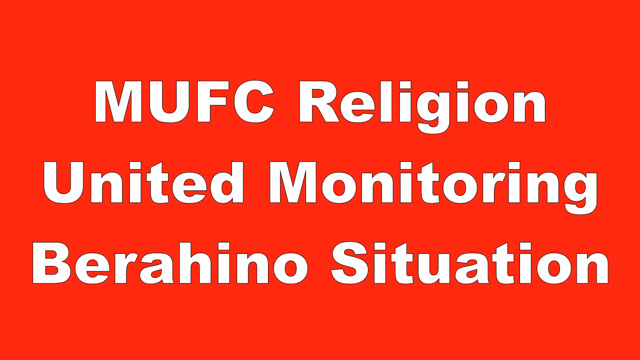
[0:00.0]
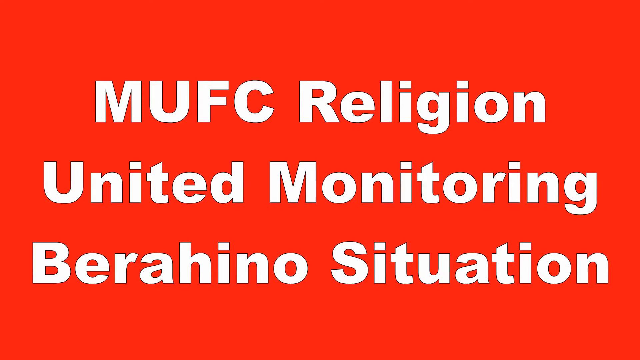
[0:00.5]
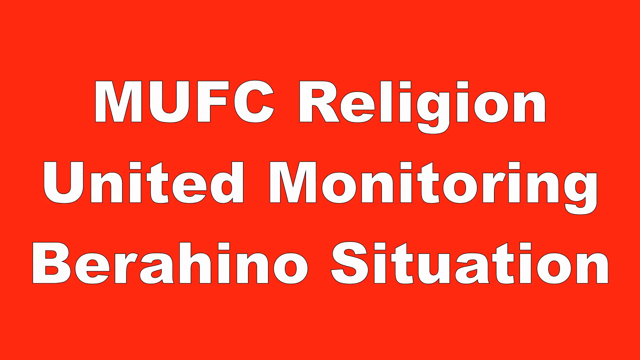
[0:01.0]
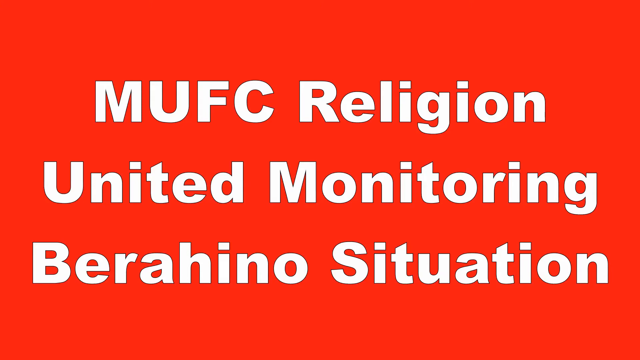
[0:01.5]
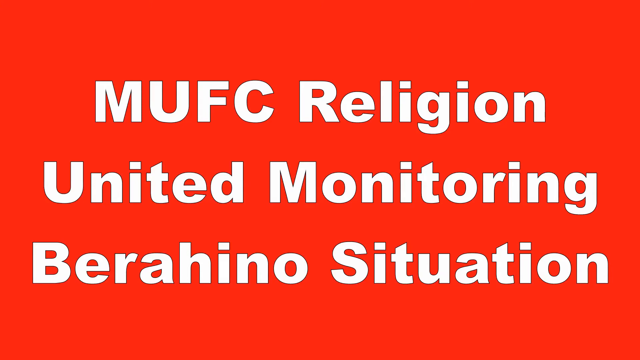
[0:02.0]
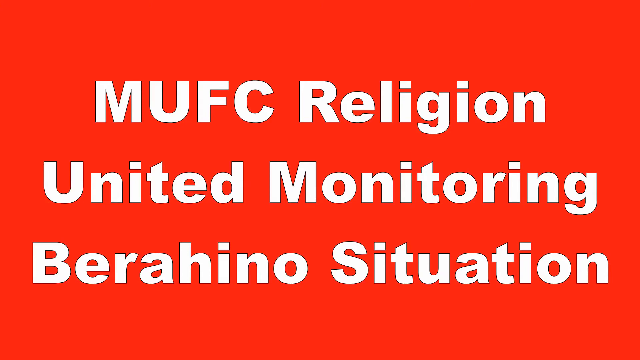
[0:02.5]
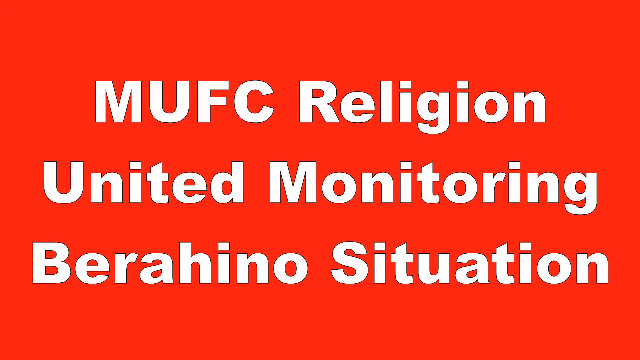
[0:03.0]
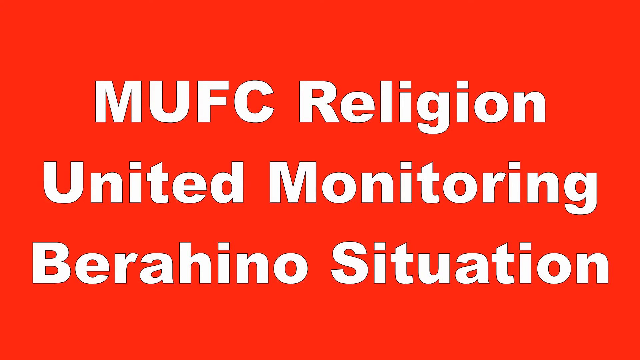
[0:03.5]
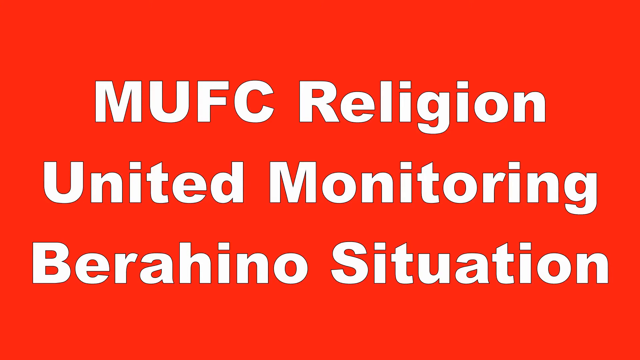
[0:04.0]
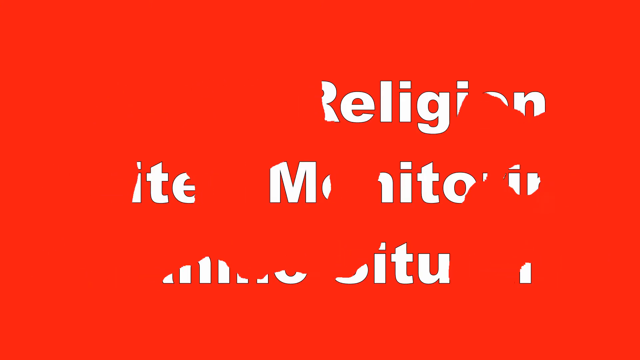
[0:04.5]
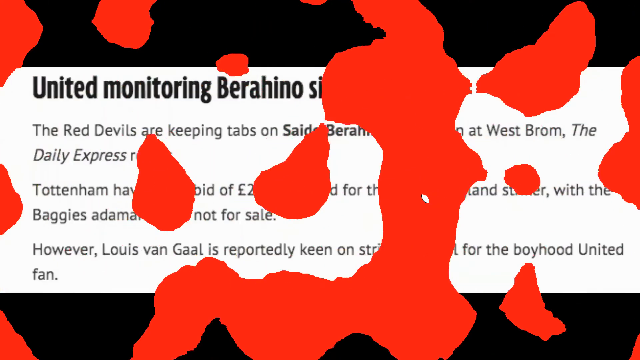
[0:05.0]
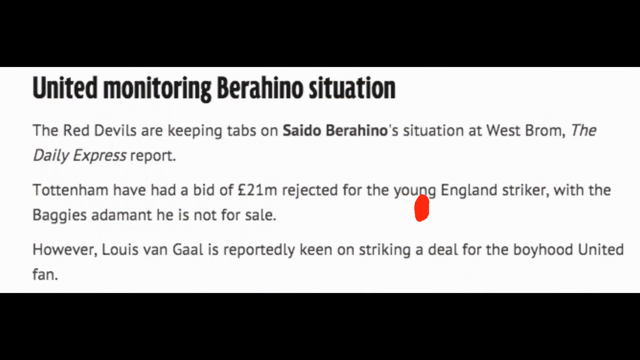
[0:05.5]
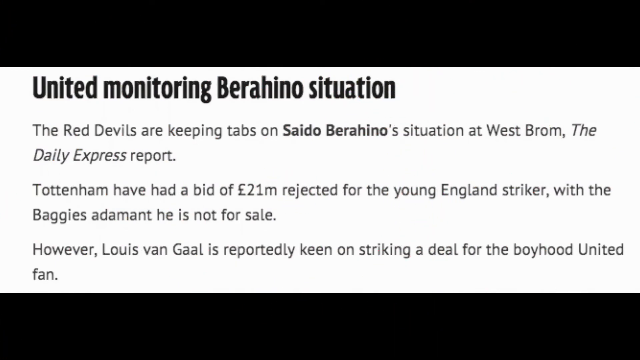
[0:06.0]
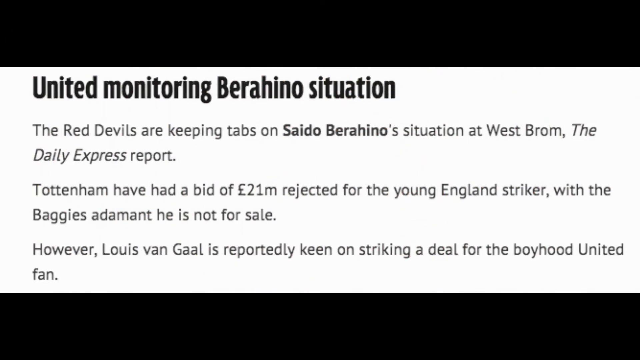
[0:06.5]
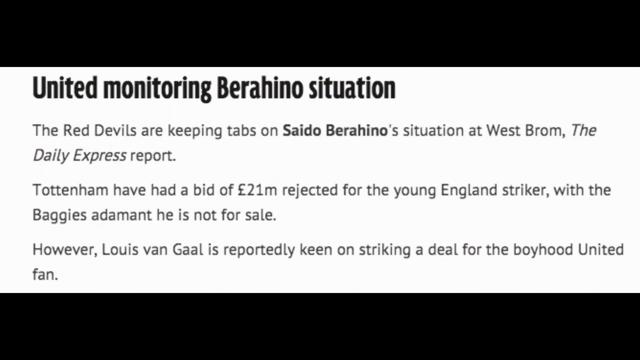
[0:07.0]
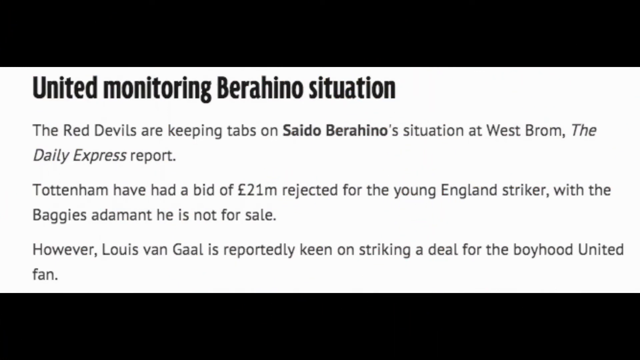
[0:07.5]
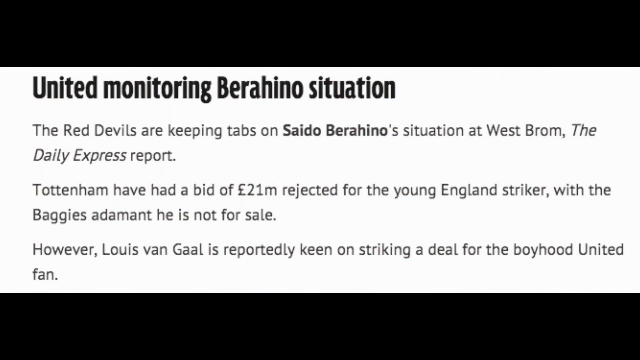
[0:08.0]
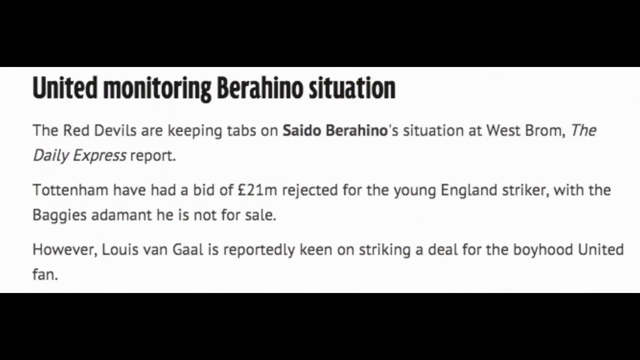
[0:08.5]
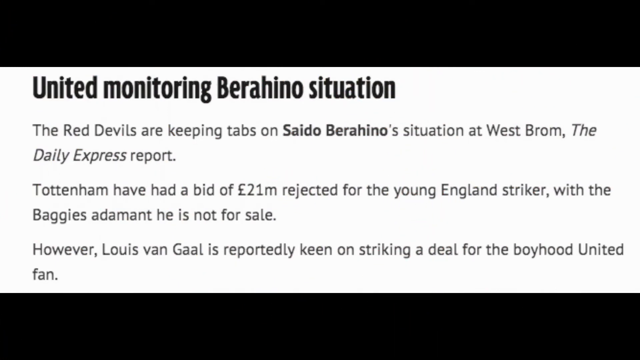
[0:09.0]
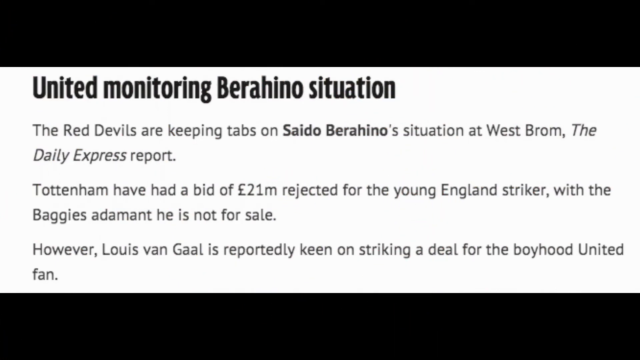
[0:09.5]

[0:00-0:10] A bright red background shows white text in the center of the screen reading "MUFC Religion United Monitoring Barahino Situation." The video then transitions to another screen with a white background and black bars at the top and bottom. In the center is black text with a black title, "United monitoring Barahino situation," followed by: "The Red Devils are keeping tabs on Saito Barahino situation at West Brom. The Daily Express report Totentop have had a bid of 21 million pounds rejected for the young England striker with the baggies adamant he is not for sale. However, Louis van Gaal is reportedly keen on striking a deal for the boyhood United fan." The text is split into three separate sentences with space between each, all in black, between the two black banners.